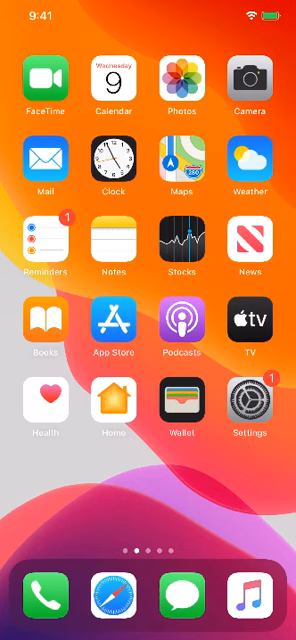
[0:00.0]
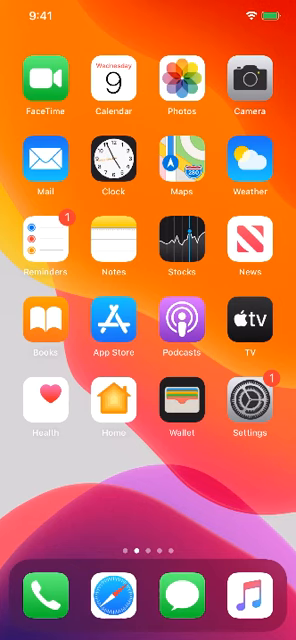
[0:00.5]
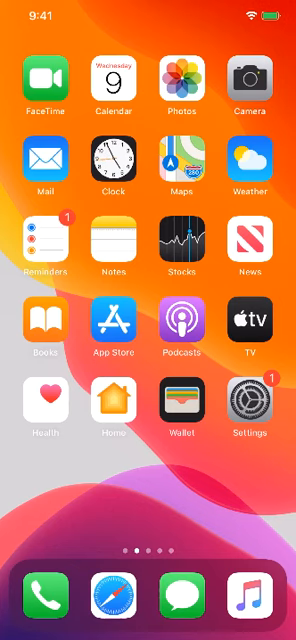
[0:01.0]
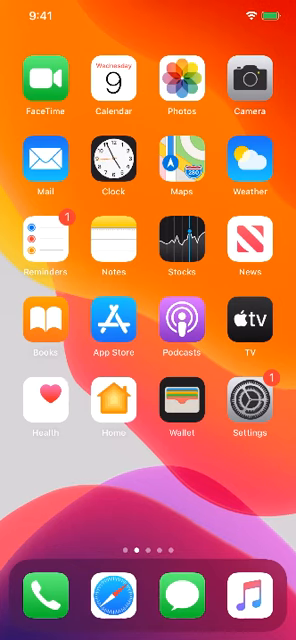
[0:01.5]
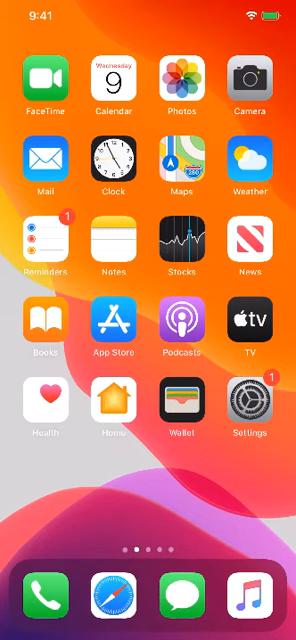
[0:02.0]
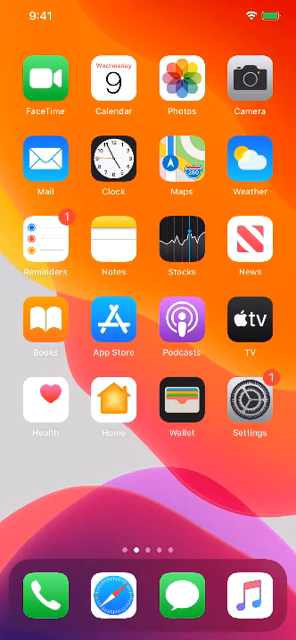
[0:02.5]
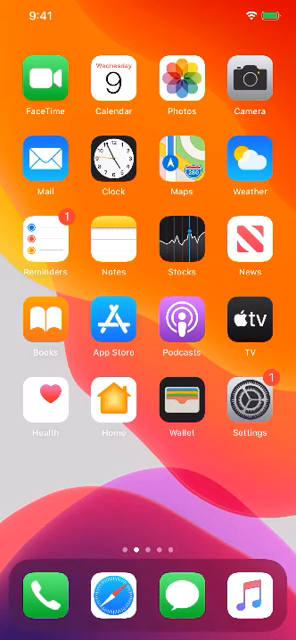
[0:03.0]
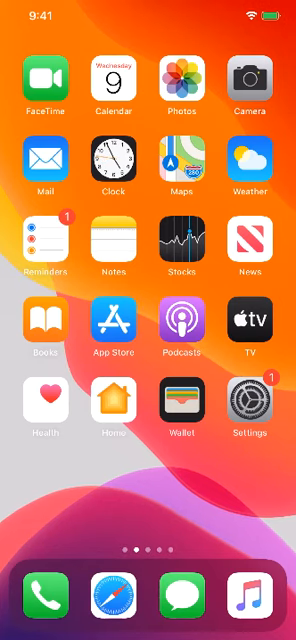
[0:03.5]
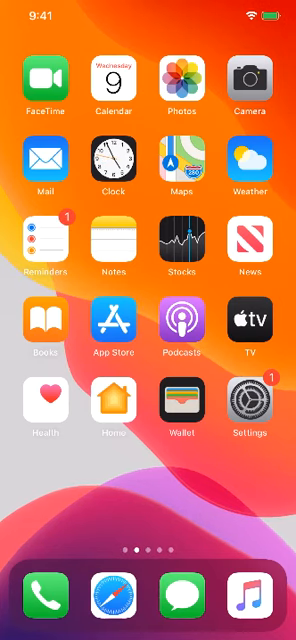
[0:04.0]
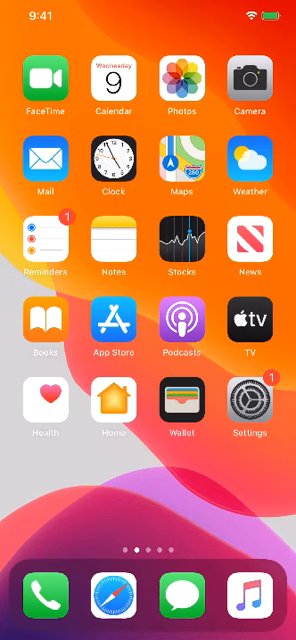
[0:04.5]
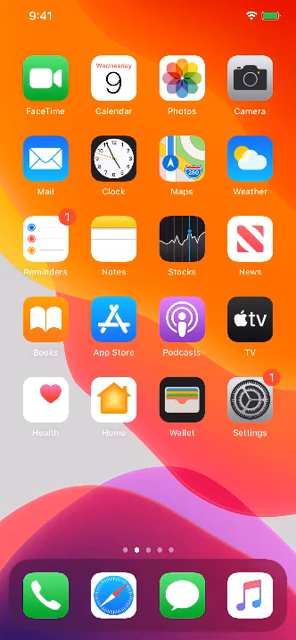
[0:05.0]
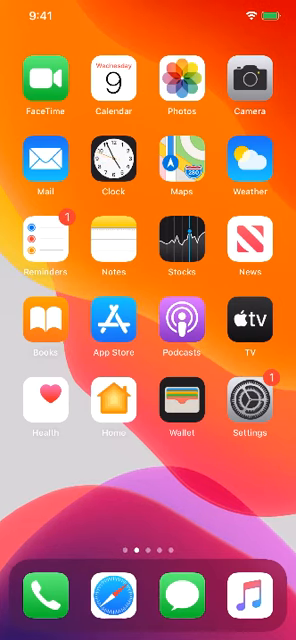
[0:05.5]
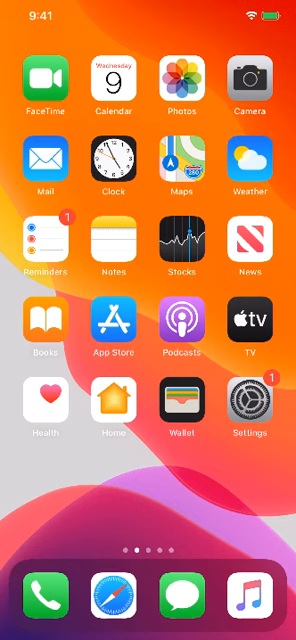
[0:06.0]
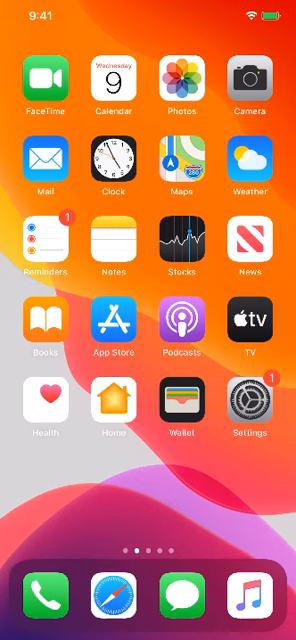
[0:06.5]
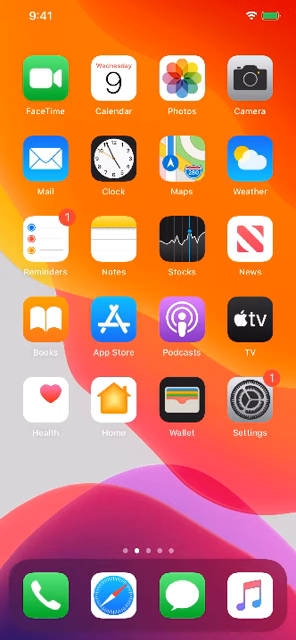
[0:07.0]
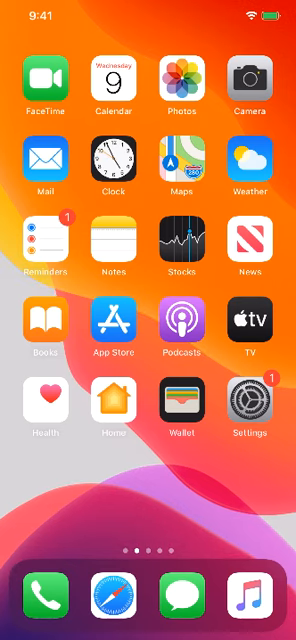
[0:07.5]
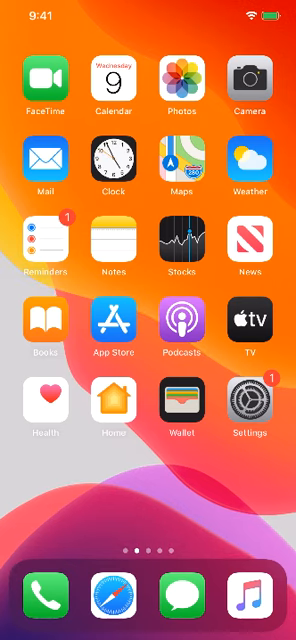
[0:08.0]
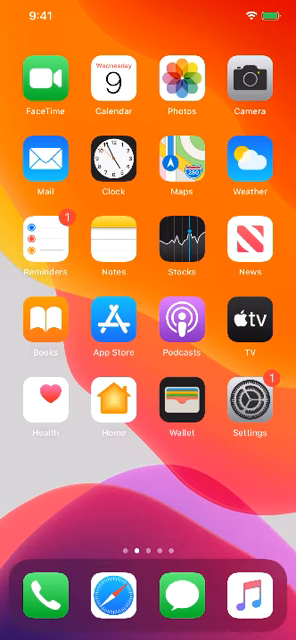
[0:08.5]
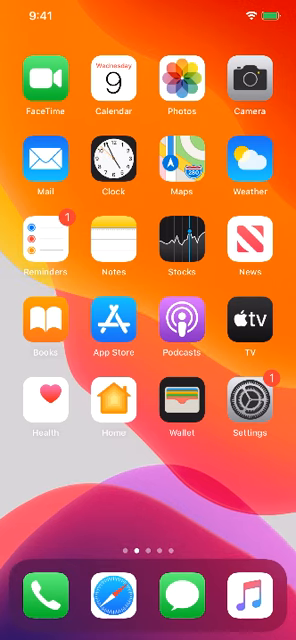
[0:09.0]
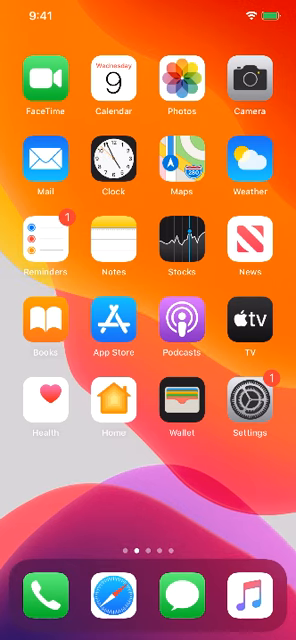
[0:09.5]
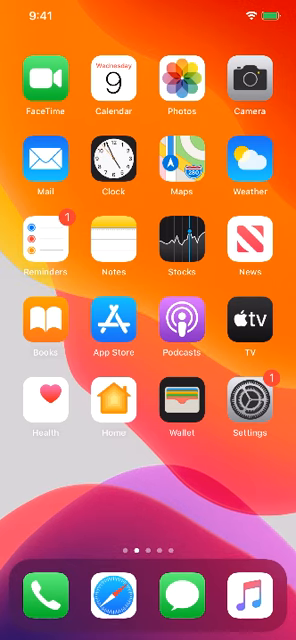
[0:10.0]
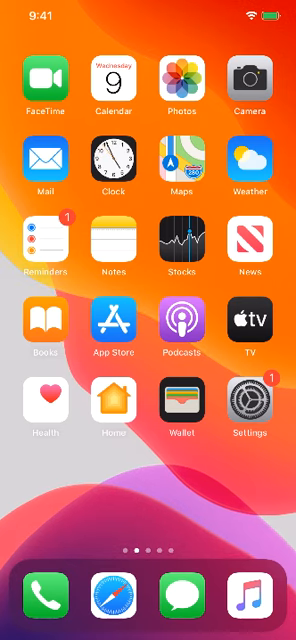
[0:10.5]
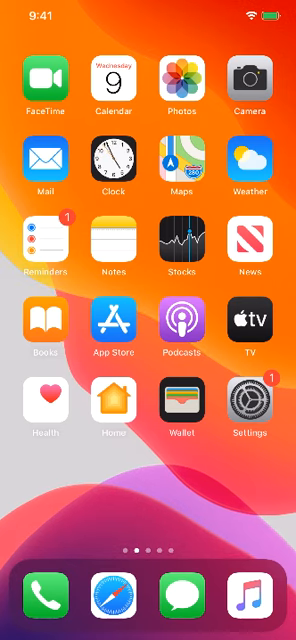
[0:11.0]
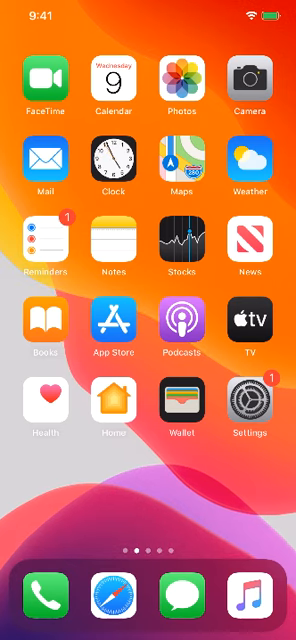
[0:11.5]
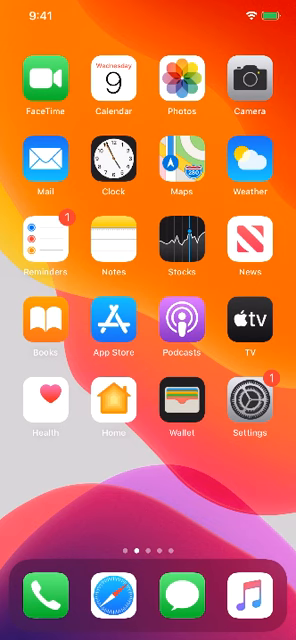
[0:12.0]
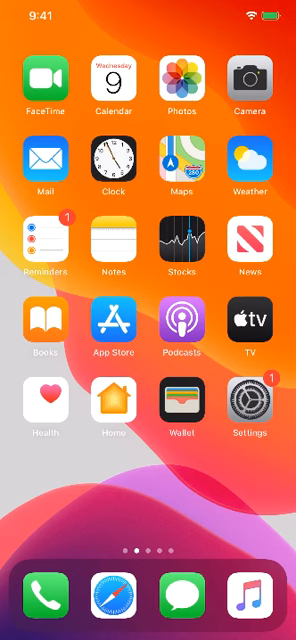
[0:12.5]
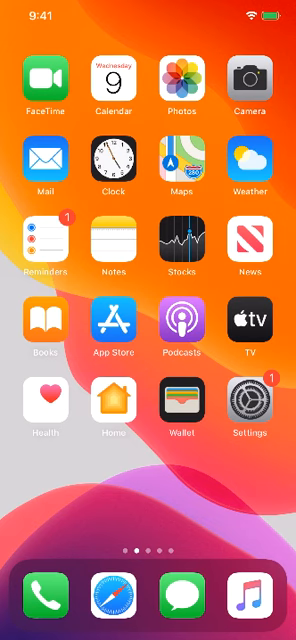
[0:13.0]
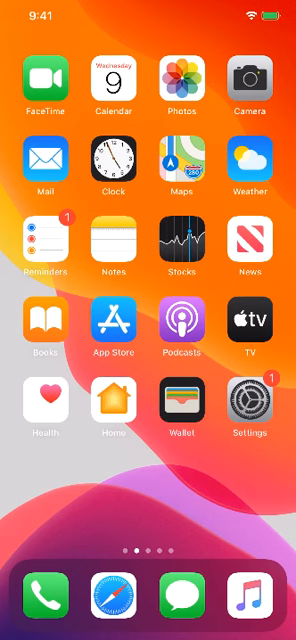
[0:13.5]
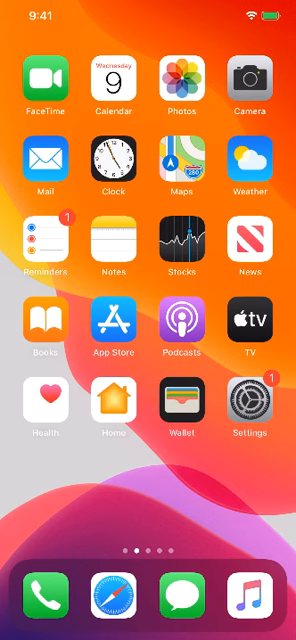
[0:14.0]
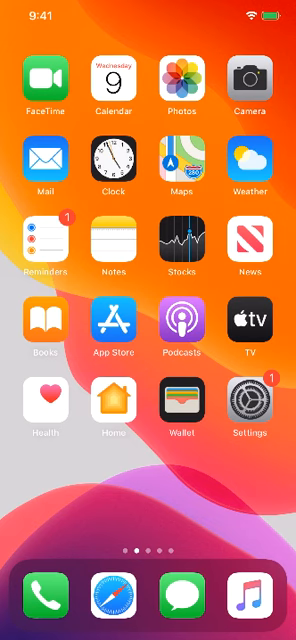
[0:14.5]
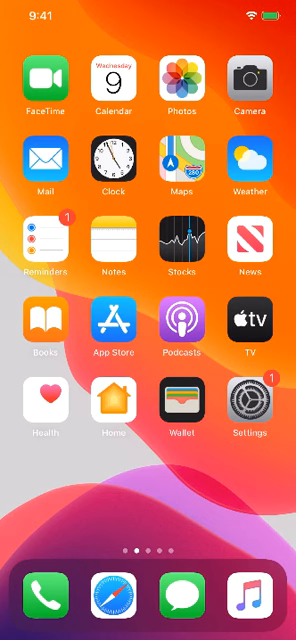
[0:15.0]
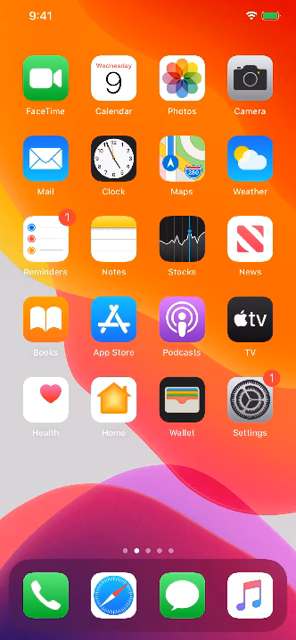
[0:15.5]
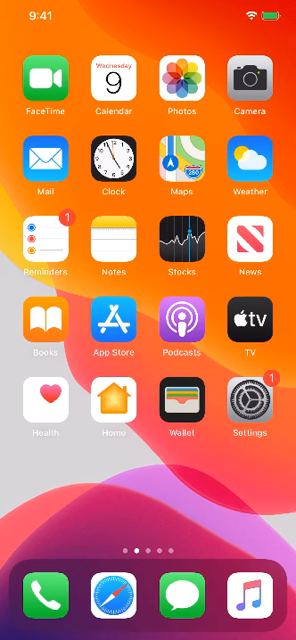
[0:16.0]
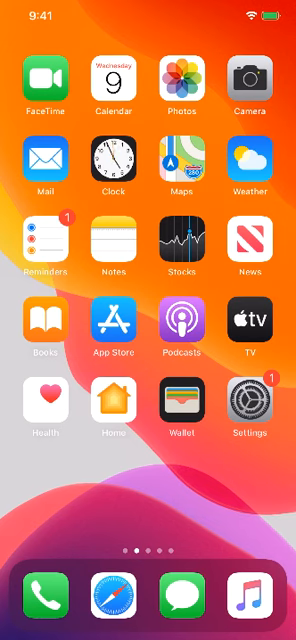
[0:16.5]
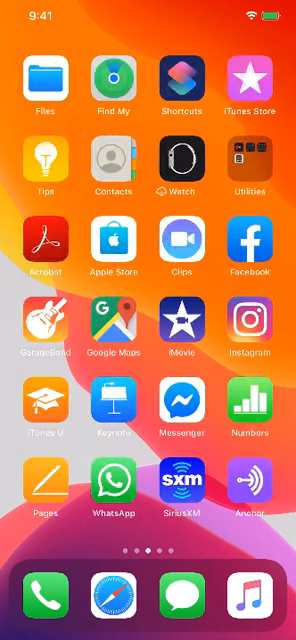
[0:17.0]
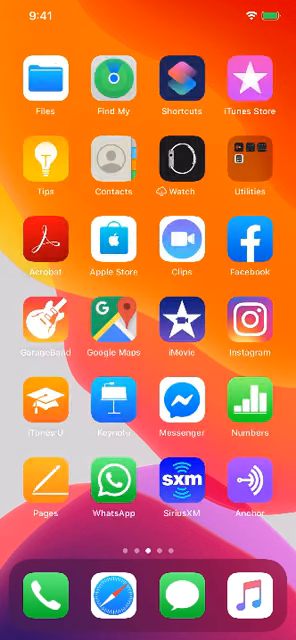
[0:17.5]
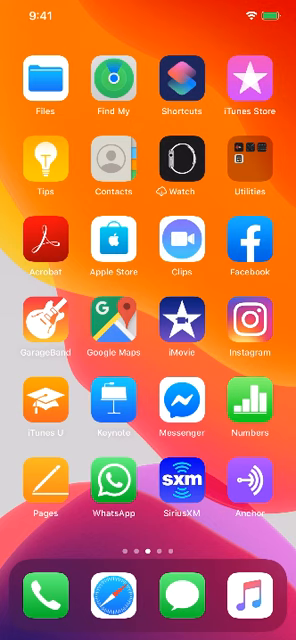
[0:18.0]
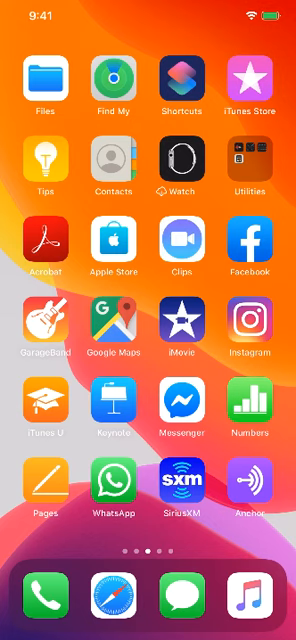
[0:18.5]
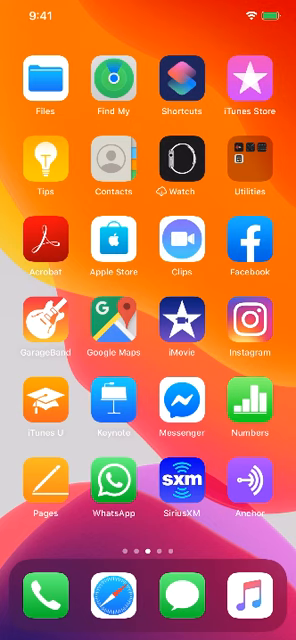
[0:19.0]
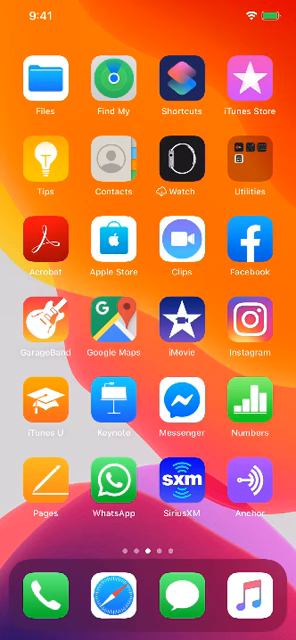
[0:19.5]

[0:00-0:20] Someone records their smartphone screen. The status bar shows the time as 9:41 and the battery as a full green bar. The phone is on its home screen, which has a generic orange, gray and purple background with various apps, though they are very low resolution. The screen stays like this for some time. The apps are arranged in four columns of five rows; starting at the top left they are FaceTime, Calendar, Photos, Camera, Mail, Clock, Maps, Weather, Stocks, TV, Podcasts, App Store and multiple others. At the bottom are the favorite apps: a call app, the Safari browser app, a messaging app and a music app. Eventually the user swipes right, showing additional apps; this second page of apps has an additional row at the bottom.